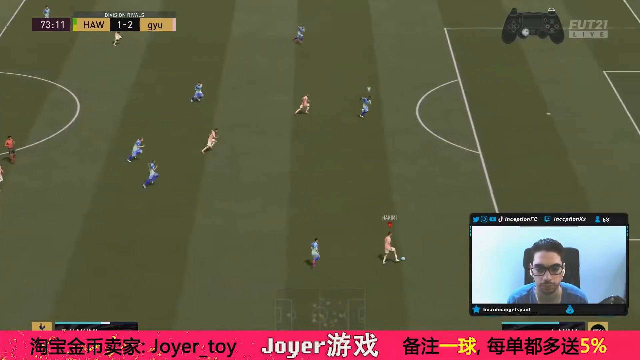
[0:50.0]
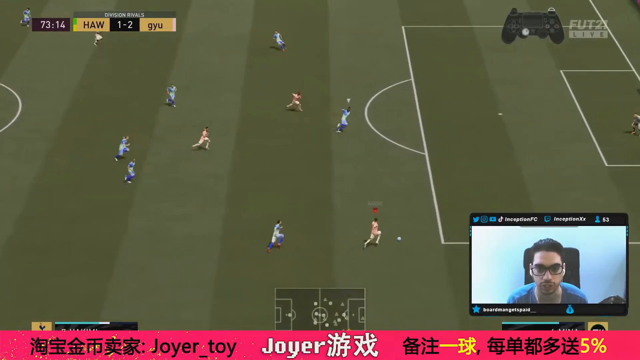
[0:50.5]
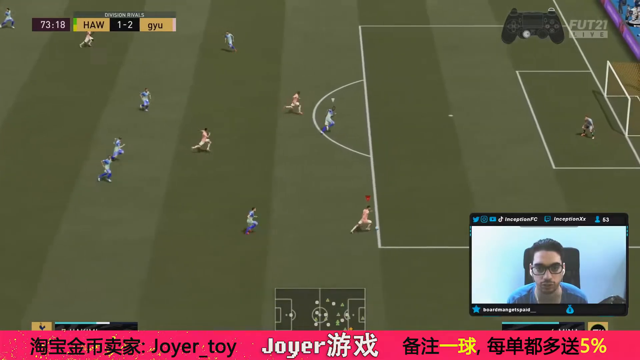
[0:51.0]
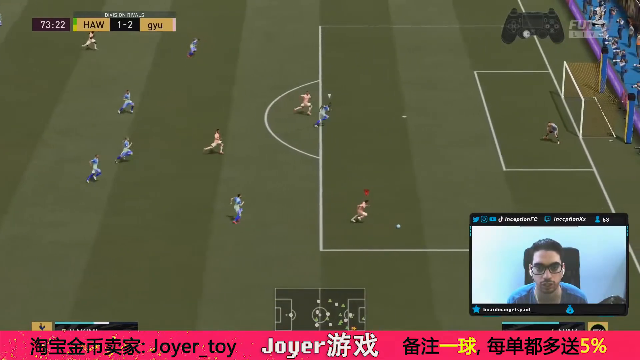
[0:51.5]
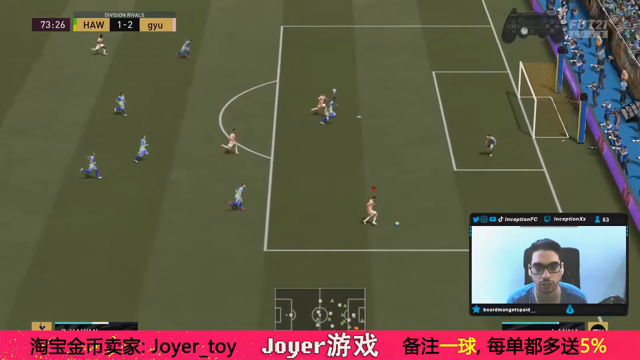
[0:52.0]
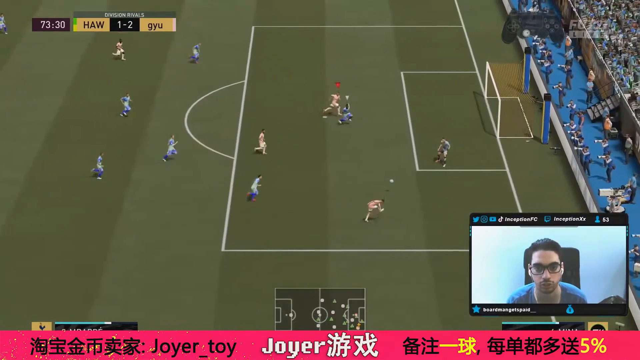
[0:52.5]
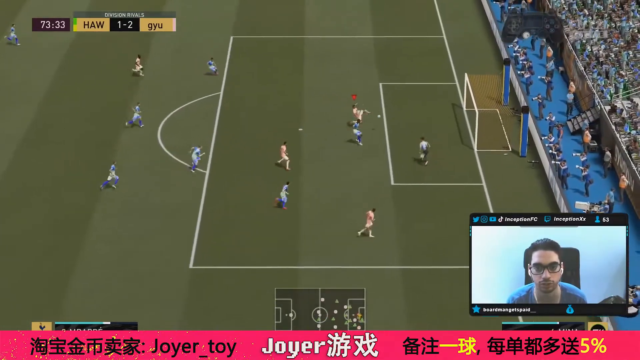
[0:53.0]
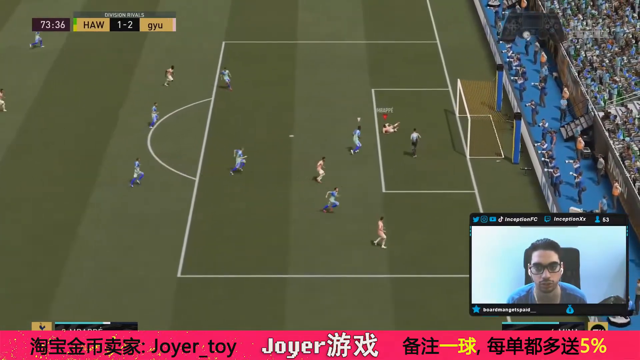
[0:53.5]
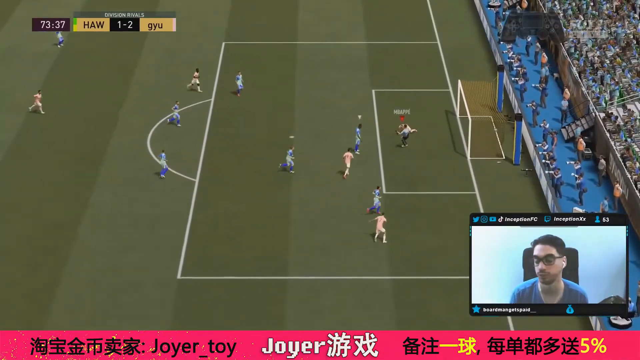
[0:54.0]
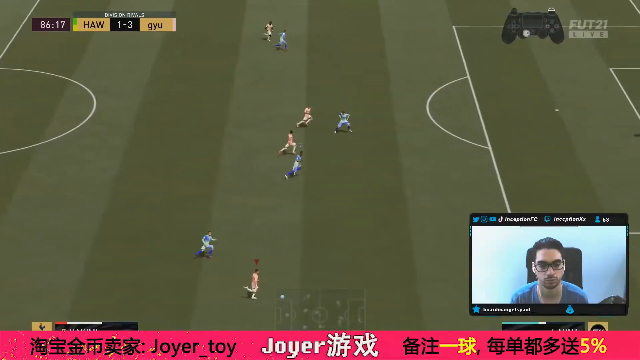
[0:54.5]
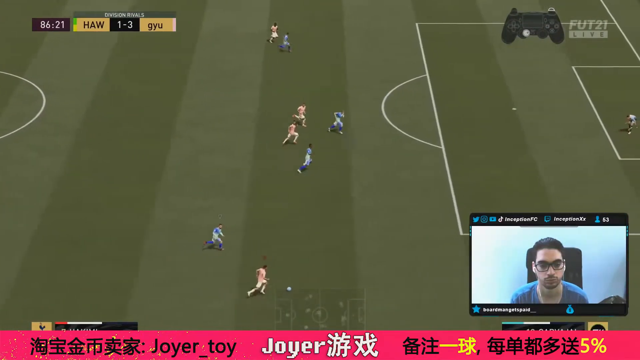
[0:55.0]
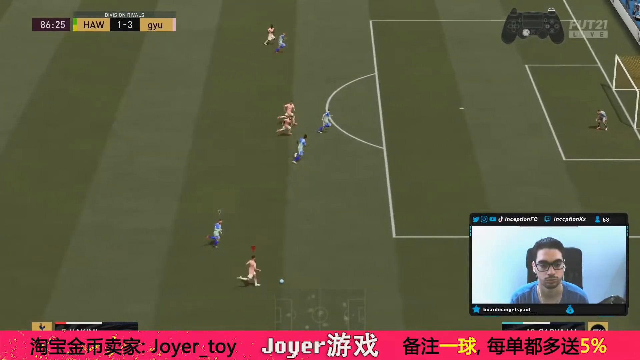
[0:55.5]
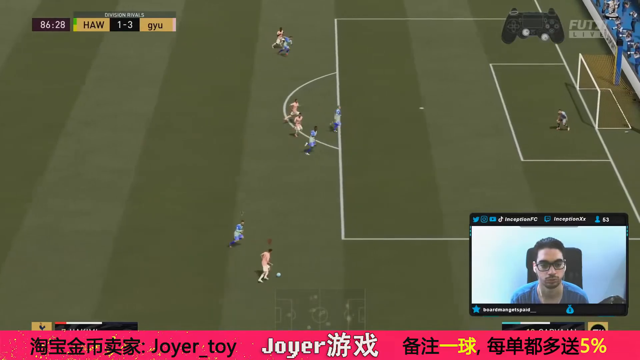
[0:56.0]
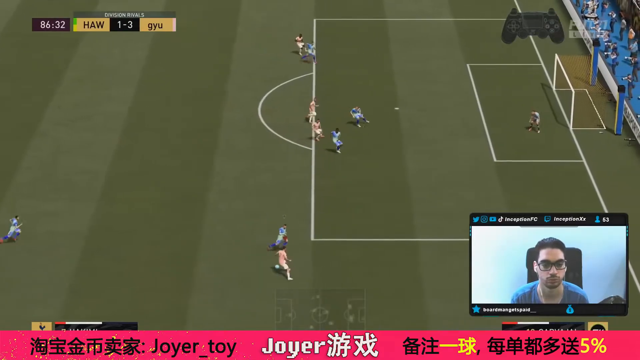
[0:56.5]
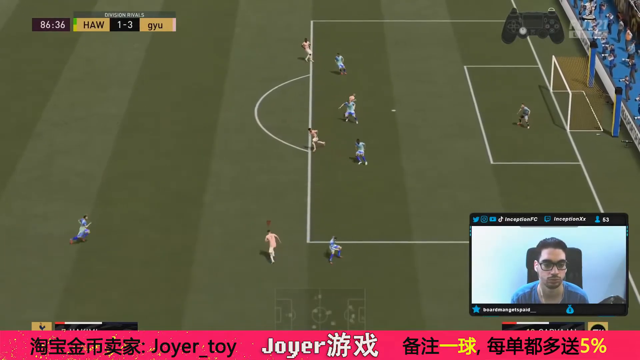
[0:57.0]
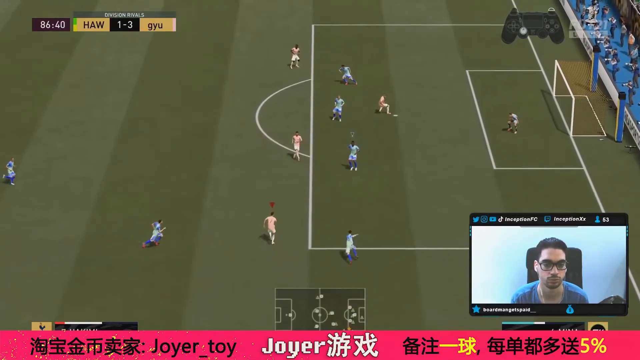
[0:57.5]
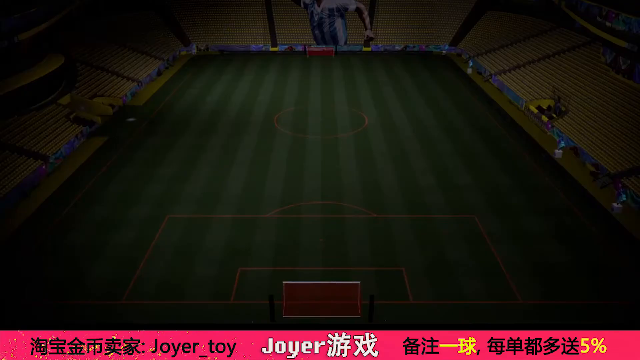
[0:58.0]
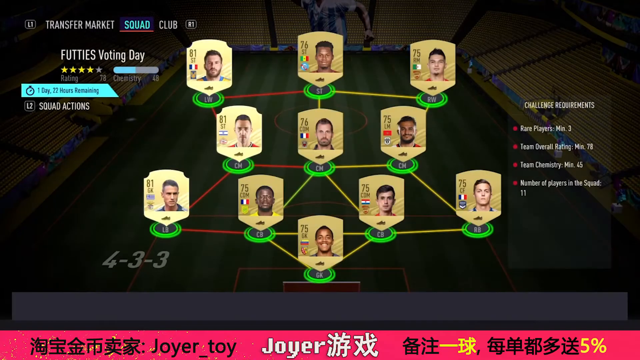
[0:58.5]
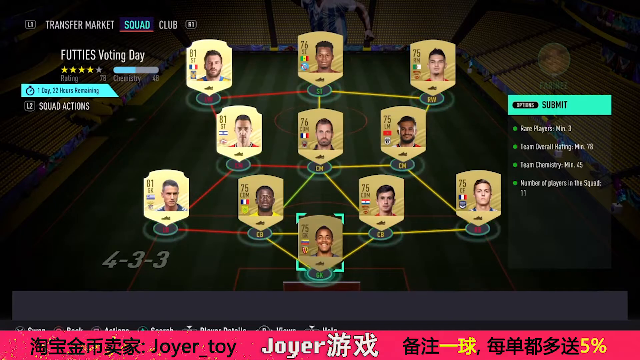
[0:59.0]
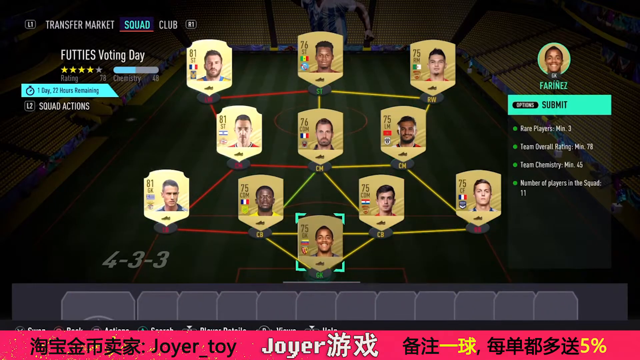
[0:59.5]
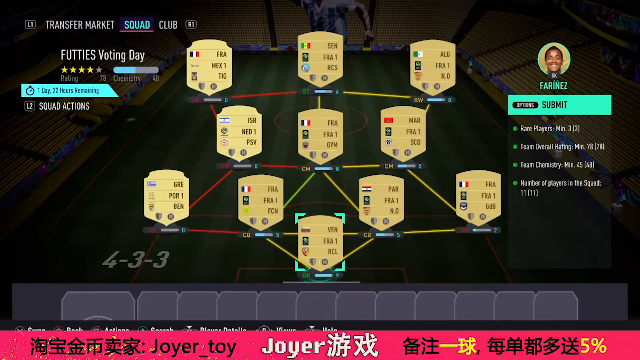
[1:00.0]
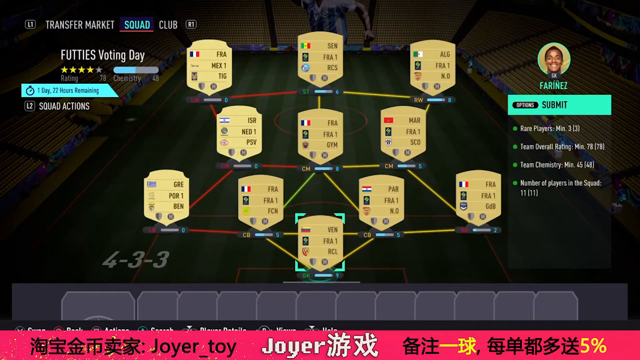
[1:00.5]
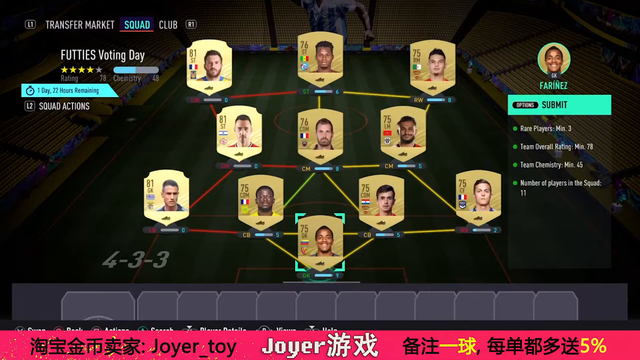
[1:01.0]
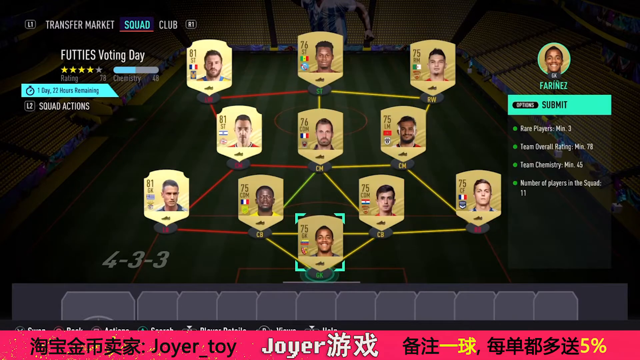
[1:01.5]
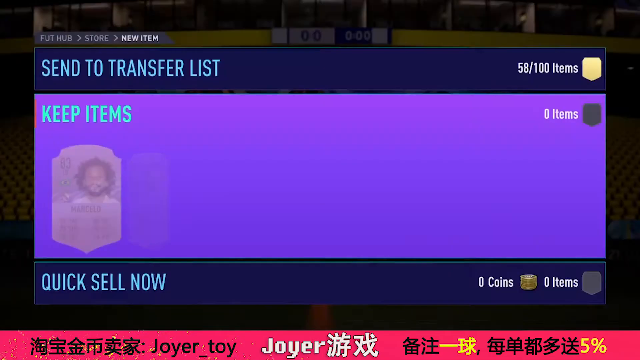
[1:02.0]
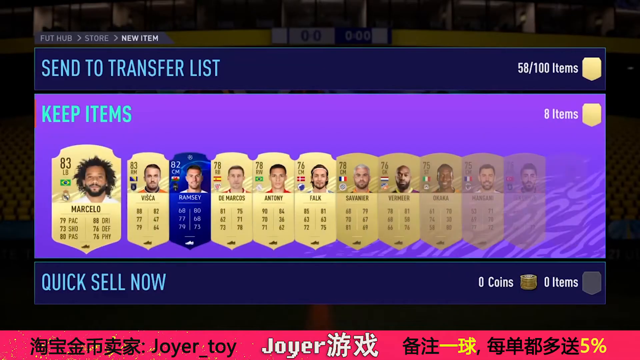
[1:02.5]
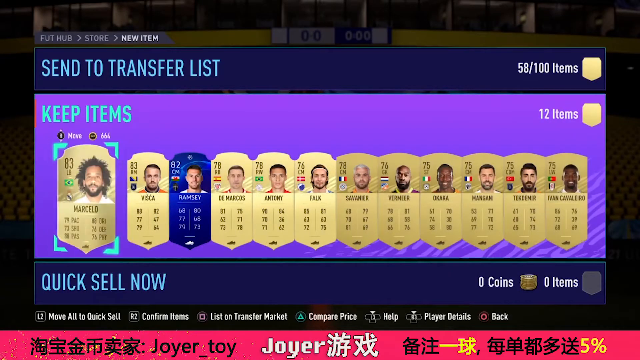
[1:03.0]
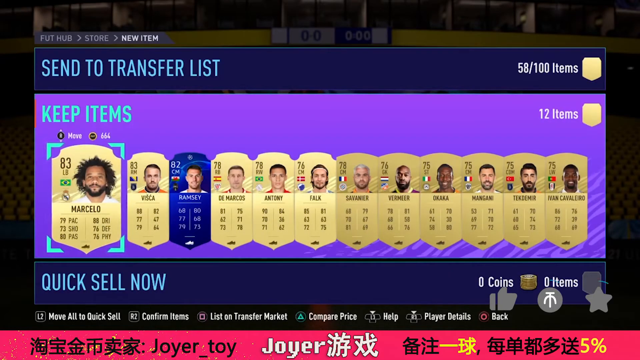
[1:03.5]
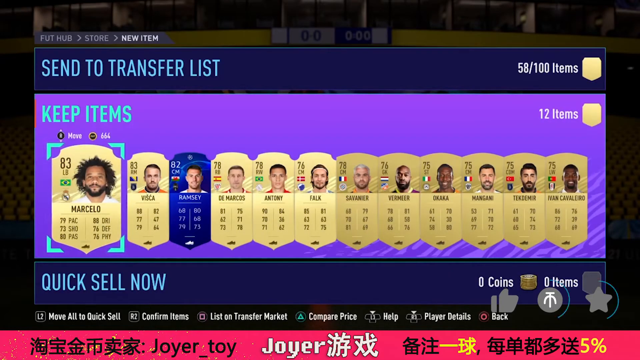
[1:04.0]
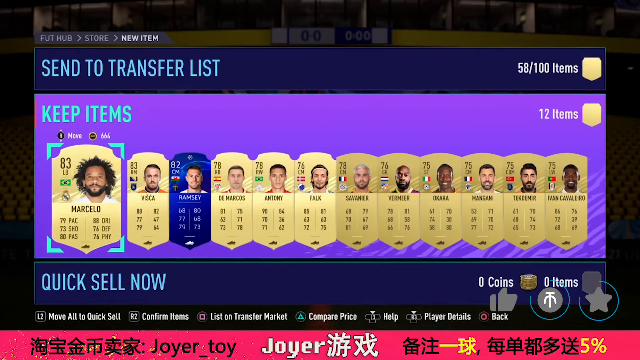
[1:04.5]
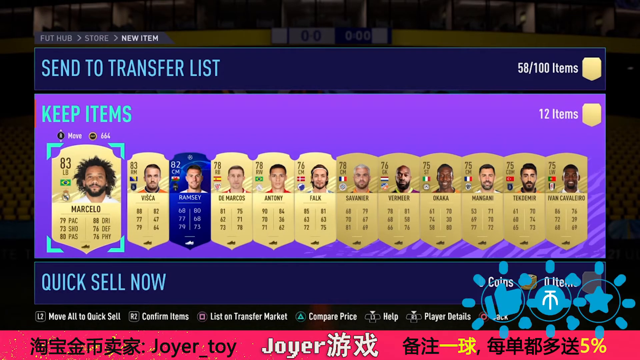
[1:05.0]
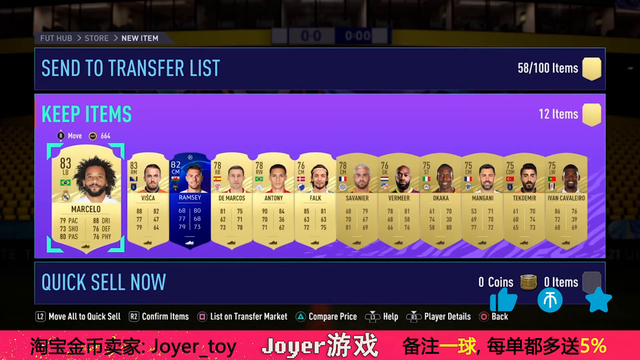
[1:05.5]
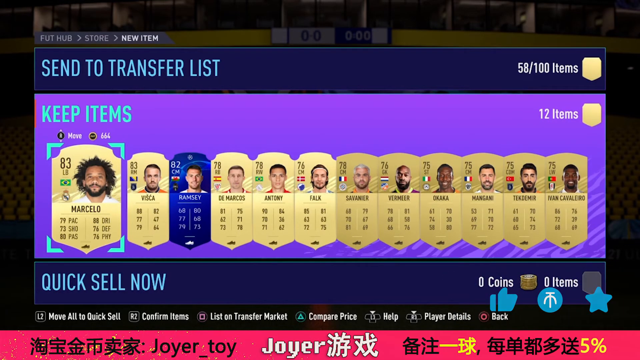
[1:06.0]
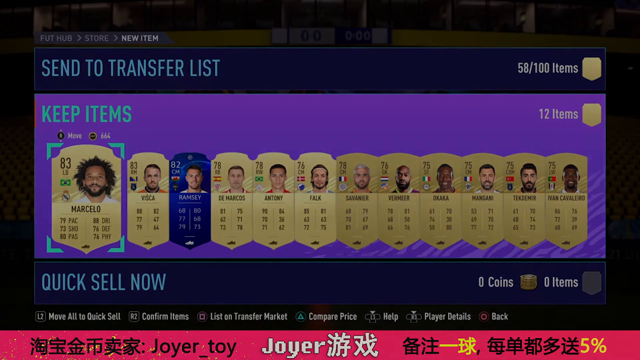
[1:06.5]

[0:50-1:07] In the game, the person passes the ball to another player, who kicks it in for a goal, and the goal is shown. The streamer stays visible in the bottom right-hand corner, with a black chair behind him. He wears black-rimmed clear glasses and a blue shirt and has black slicked-back hair. Around his box are a Twitter logo, an Instagram logo, a PlayStation logo and a TikTok logo, along with text that says "Inception FC". There is what looks like a chat bubble icon, then text that says "Inception X" with a capital X followed by a lowercase x. An icon of a person's head is shown with "53", probably meaning 53 people are watching the stream. After the goal, the video cuts to a pause-type screen showing a voting day and his squad, with an option to submit a specific player. It then moves to another screen that says "send a transfer list", showing 12 different players, with "keep items" and "quick sell now" options. Possibly he has just bought a pack of players and can either sell or trade them.